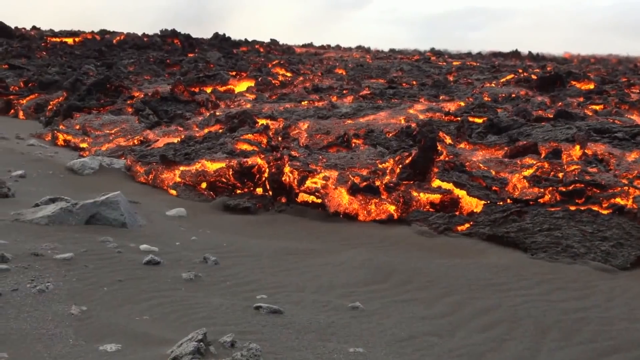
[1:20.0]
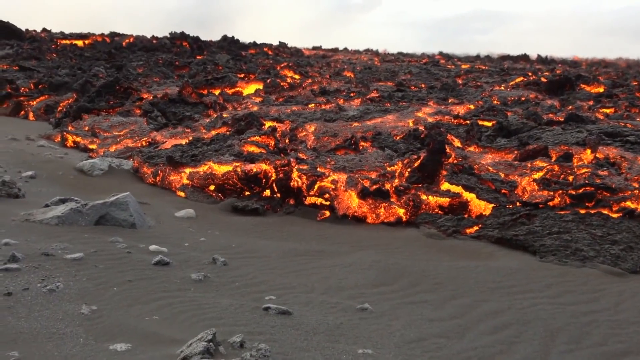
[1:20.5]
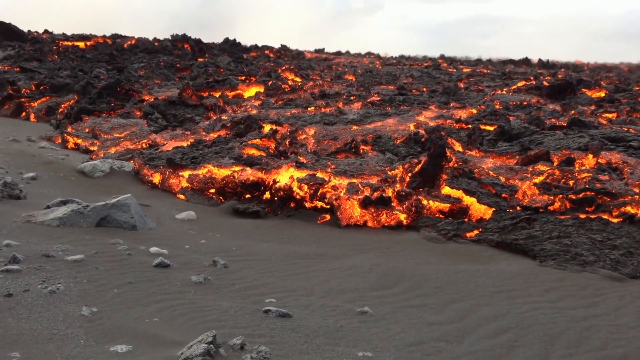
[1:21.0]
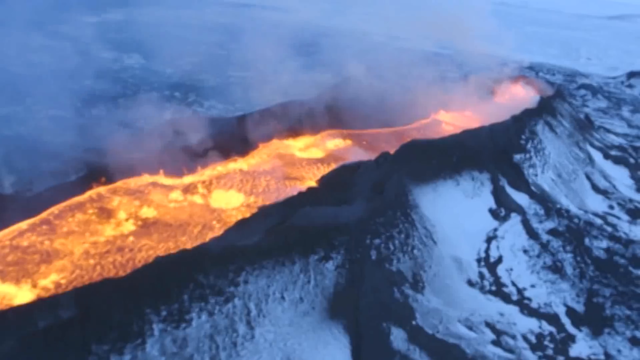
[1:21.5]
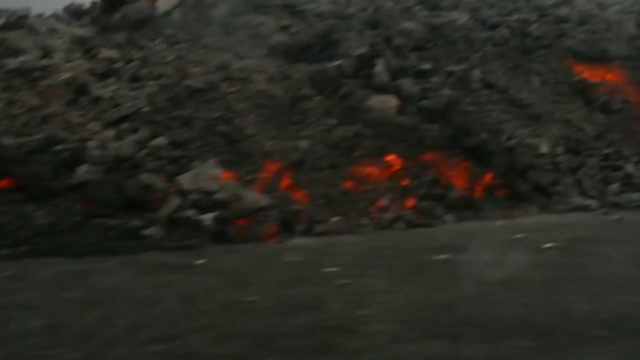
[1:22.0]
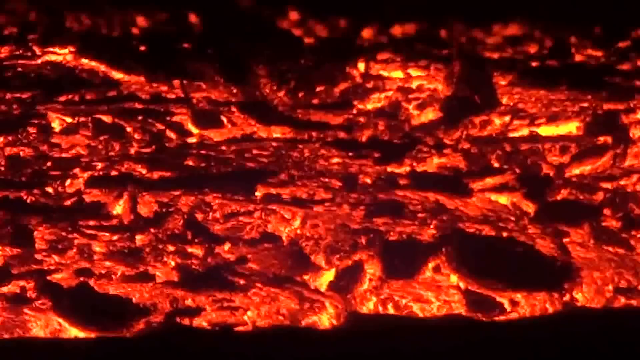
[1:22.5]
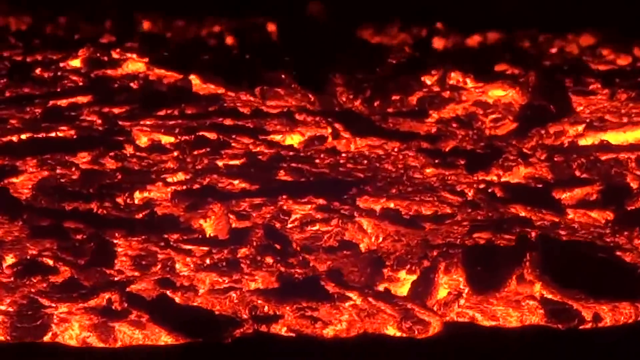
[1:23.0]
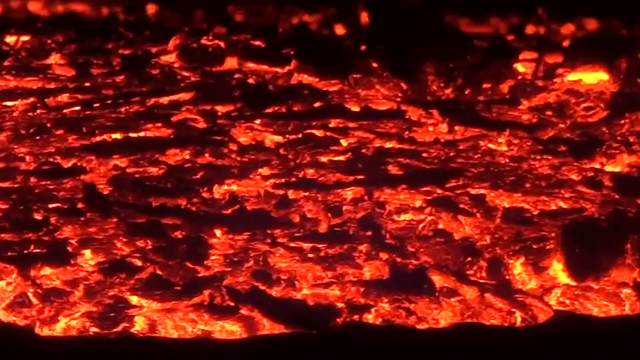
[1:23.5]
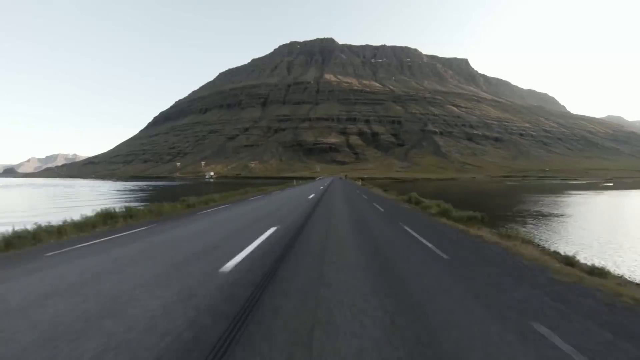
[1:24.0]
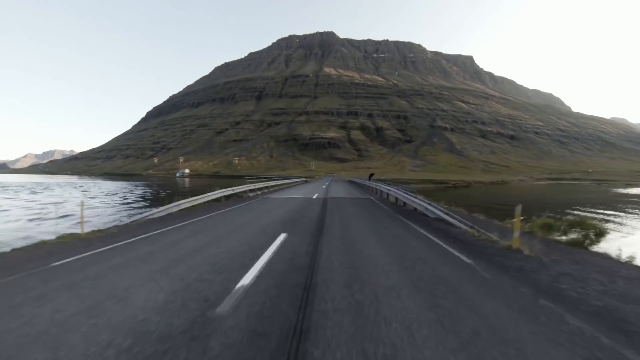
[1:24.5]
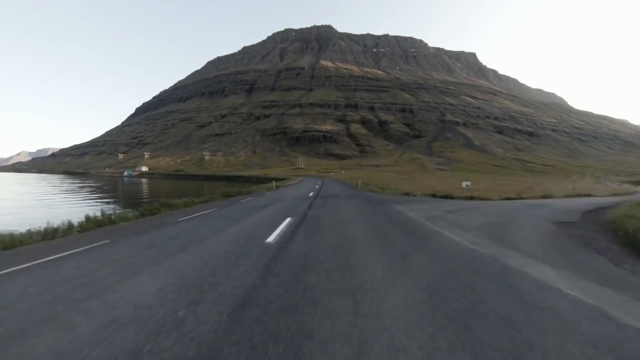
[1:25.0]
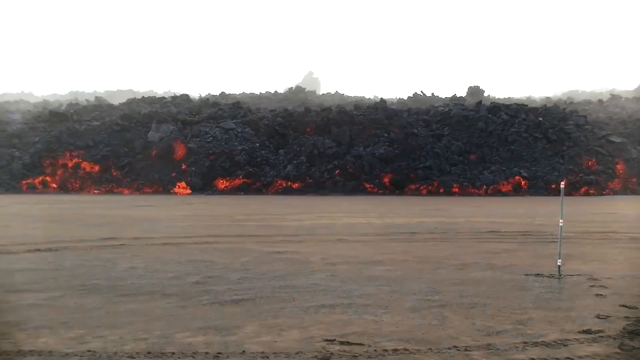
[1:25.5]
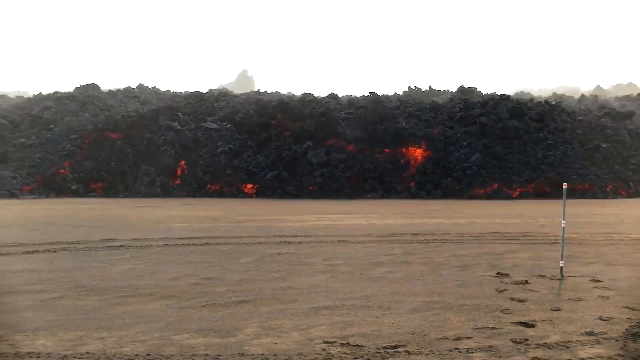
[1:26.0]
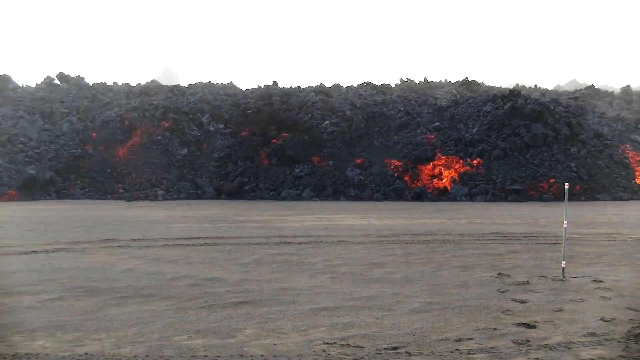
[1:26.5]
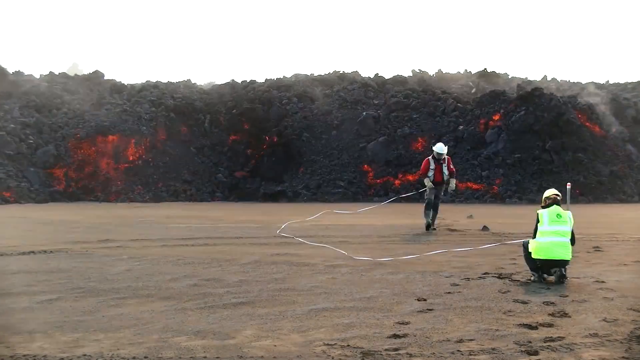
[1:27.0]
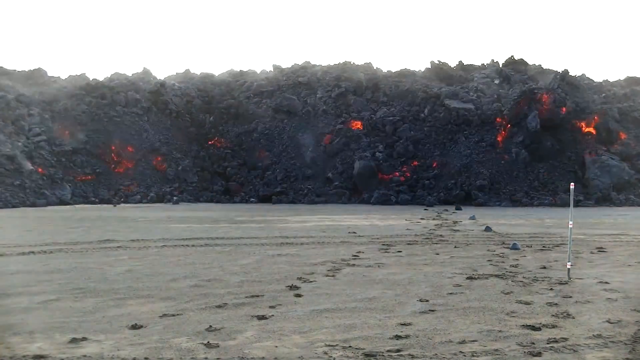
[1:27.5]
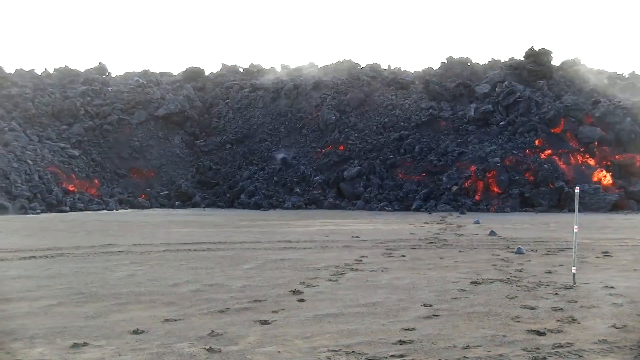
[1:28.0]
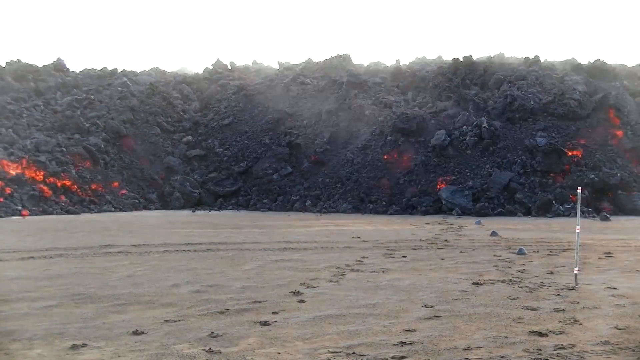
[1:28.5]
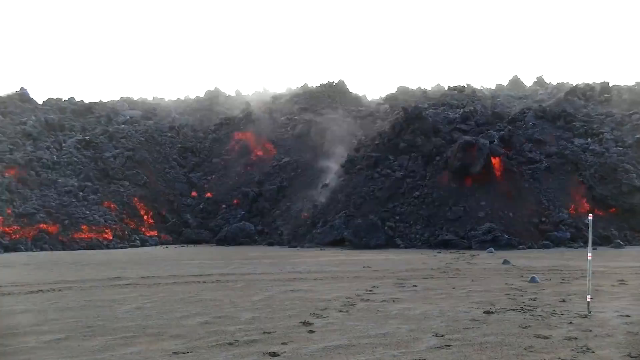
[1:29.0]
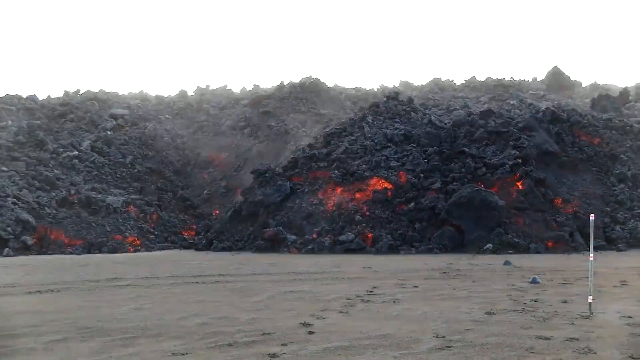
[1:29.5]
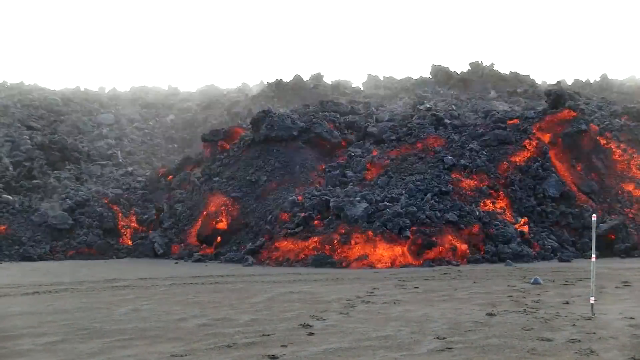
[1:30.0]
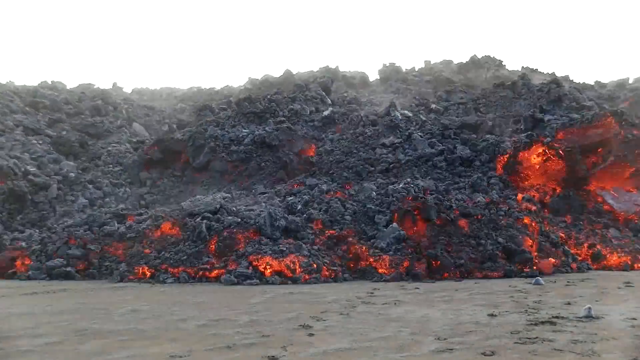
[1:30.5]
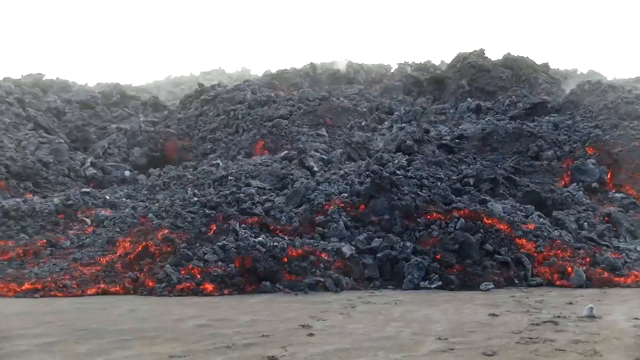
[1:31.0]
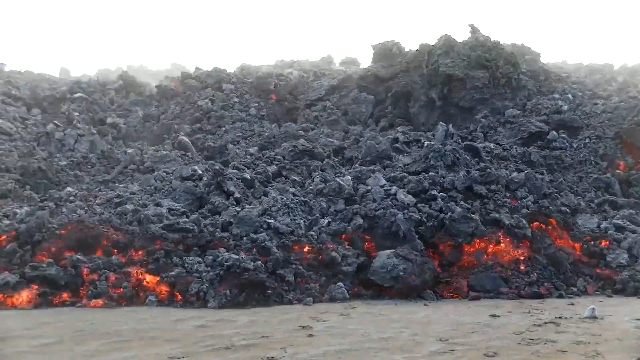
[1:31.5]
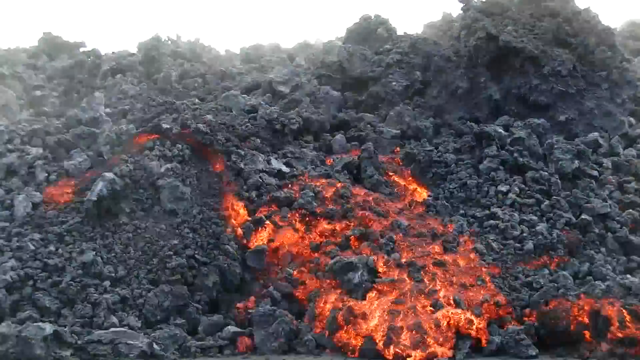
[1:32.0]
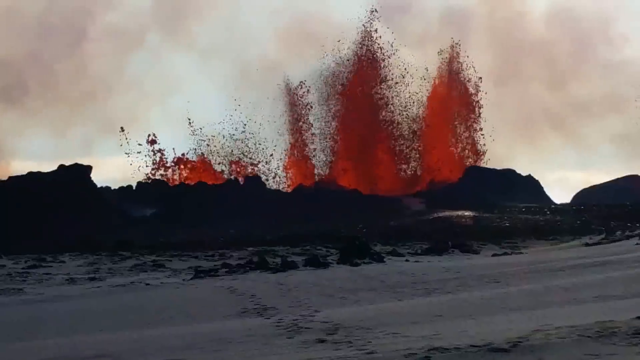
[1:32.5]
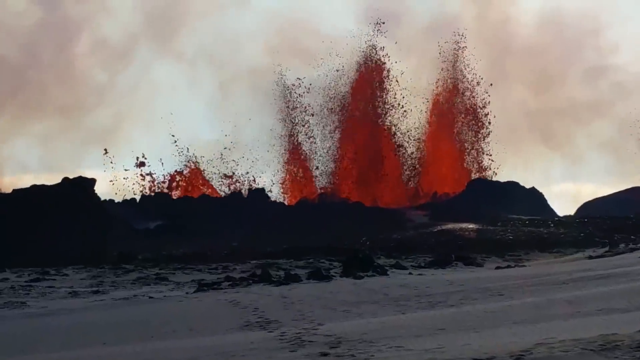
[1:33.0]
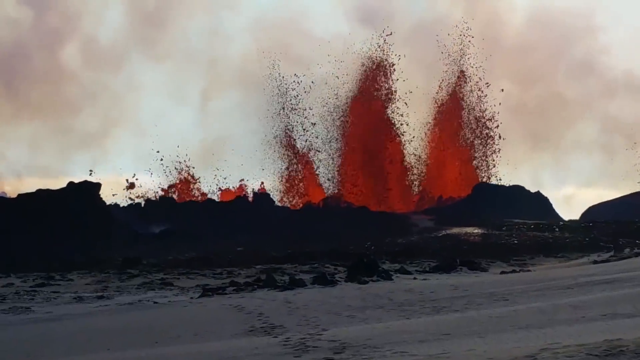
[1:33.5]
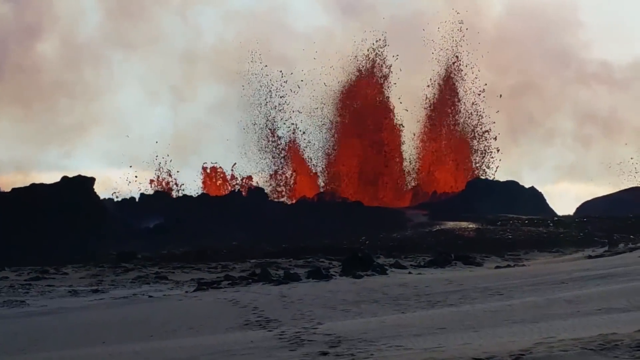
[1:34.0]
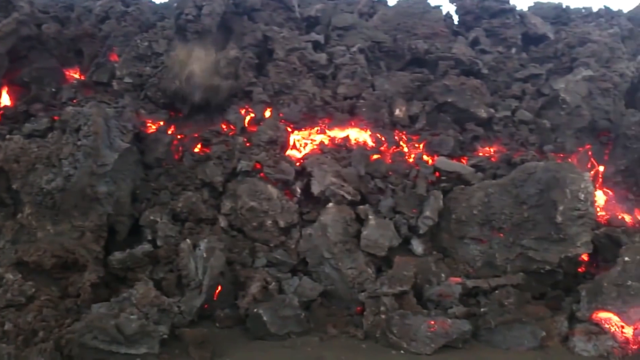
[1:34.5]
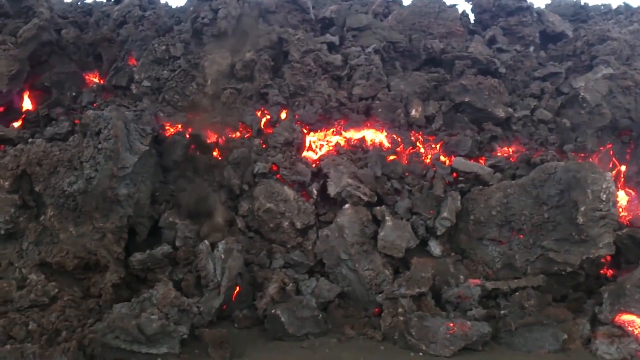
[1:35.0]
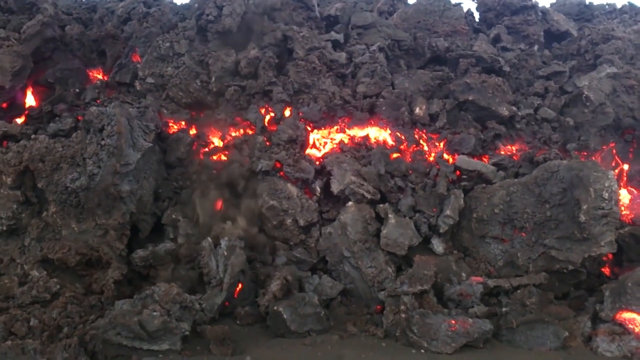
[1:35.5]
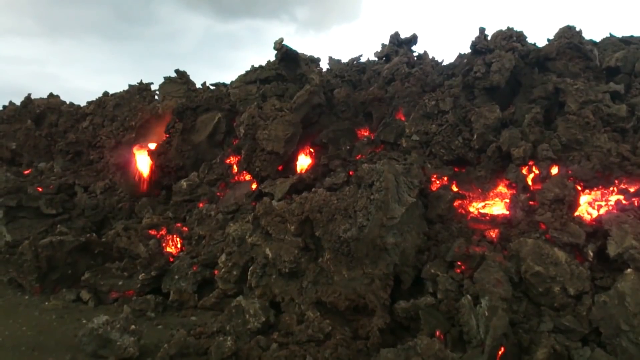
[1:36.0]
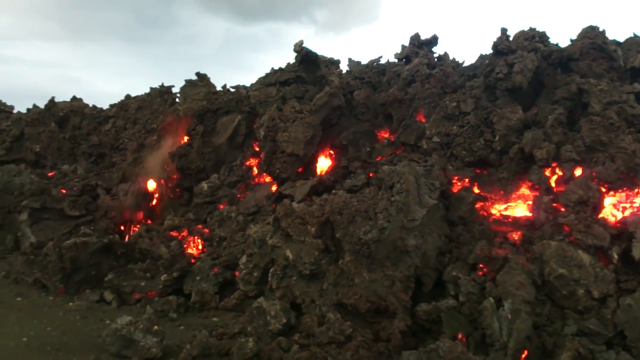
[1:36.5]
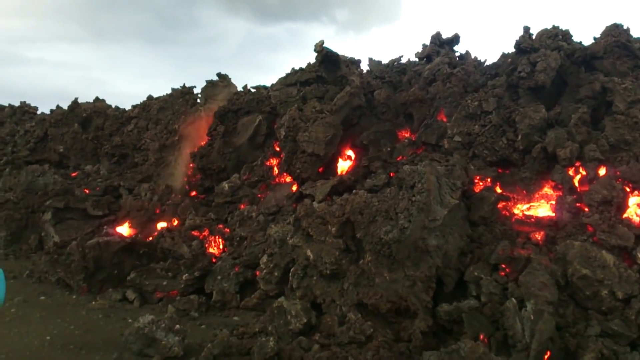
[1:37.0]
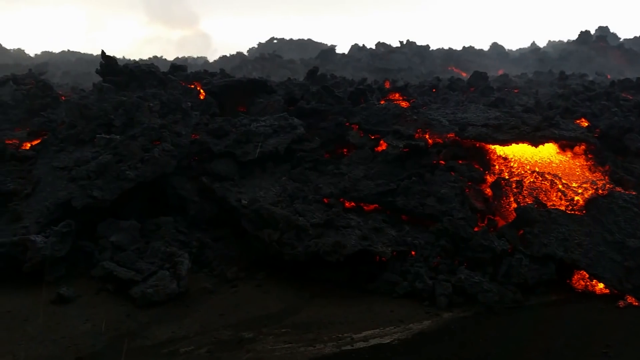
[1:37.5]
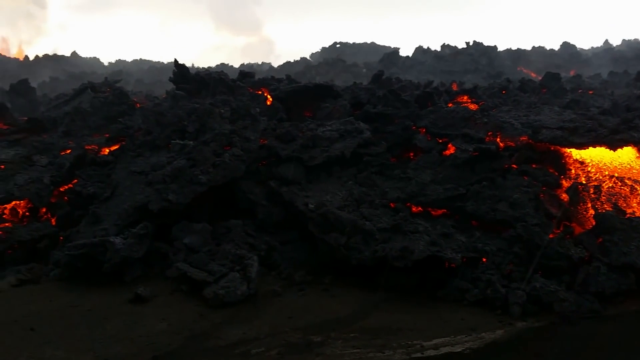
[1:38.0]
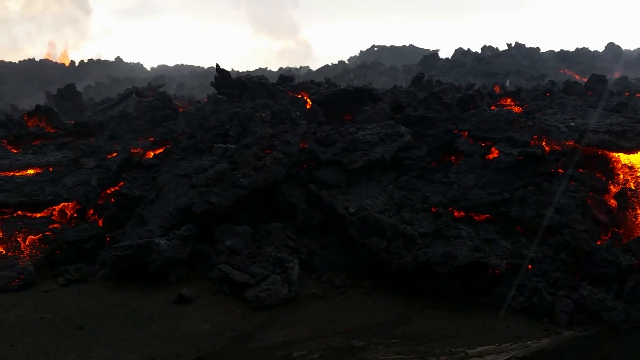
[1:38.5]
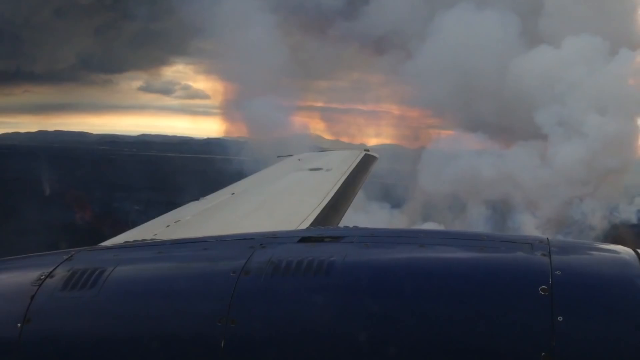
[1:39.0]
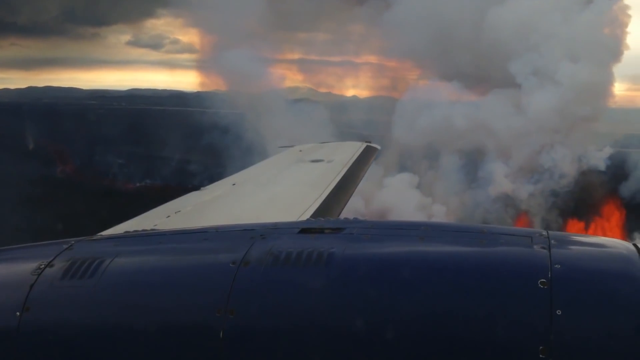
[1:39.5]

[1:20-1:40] The camera is on the lava on the ground, then fast zooms across the mountaintop where lava is flowing. The camera zooms in to the lava, showing orange and black colors mixed together. The camera then appears to be in a car speeding towards the mountain, with everything fast-forwarded. The view is then on brown ground with the lava far away, and the bushes are burning. Many people are working on this ground, all wearing different types of vests and helmets. The camera continues to zoom fast towards the lava debris, getting closer and closer, and then zooms in on it. It moves to another image of the lava exploding towards the top, with the sky full of smoke. The camera zooms on the lava debris and continues to move around as lava falls. The camera then shows the lava from a plane.